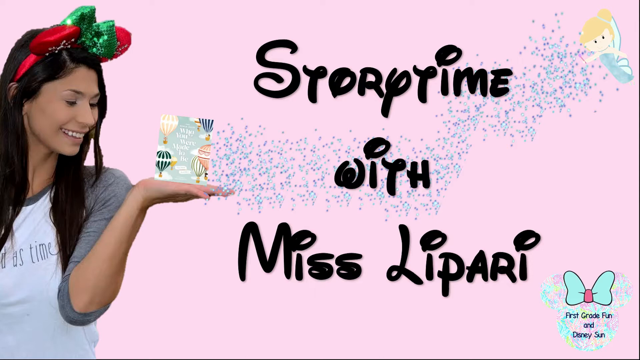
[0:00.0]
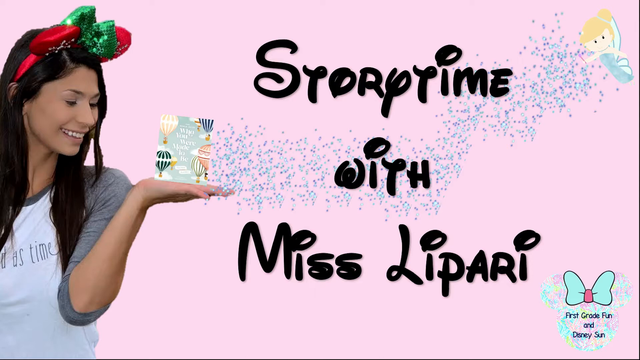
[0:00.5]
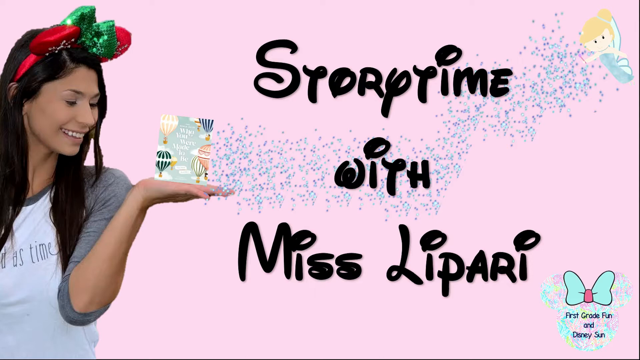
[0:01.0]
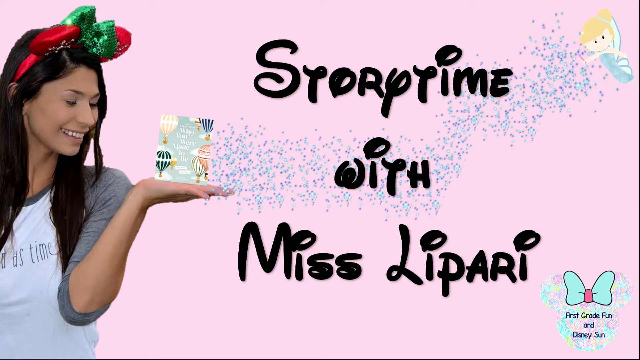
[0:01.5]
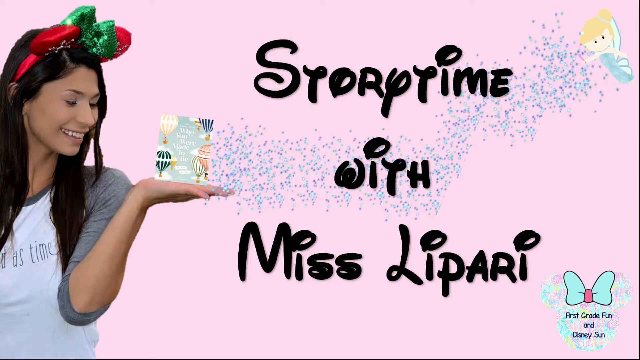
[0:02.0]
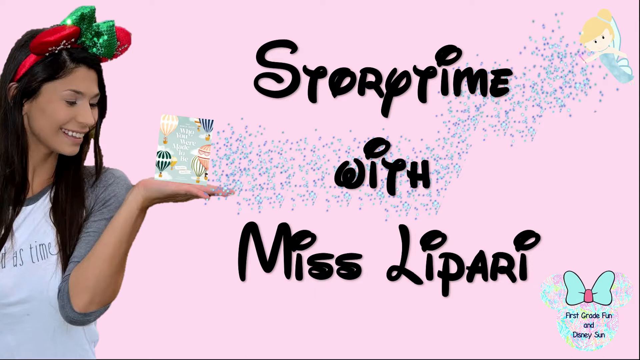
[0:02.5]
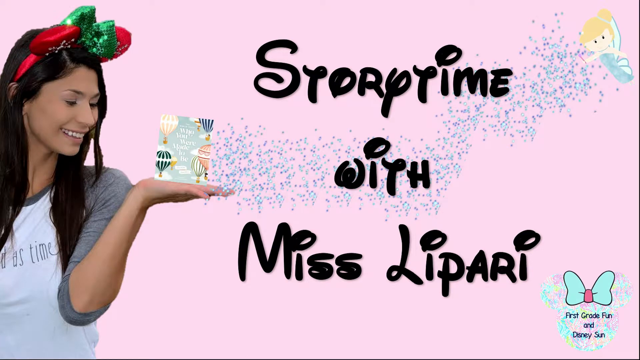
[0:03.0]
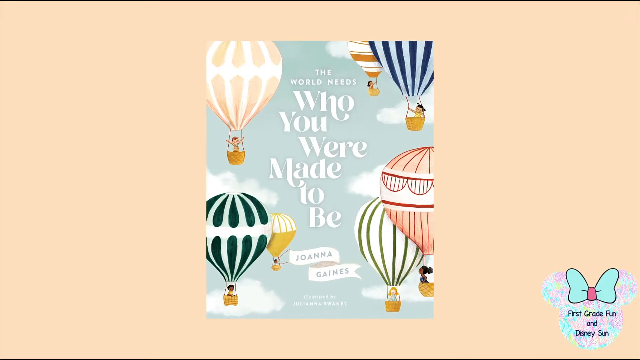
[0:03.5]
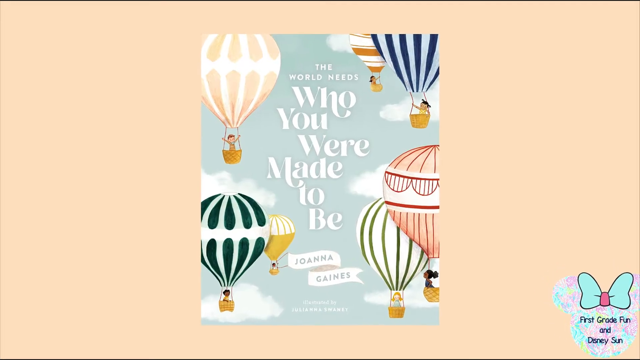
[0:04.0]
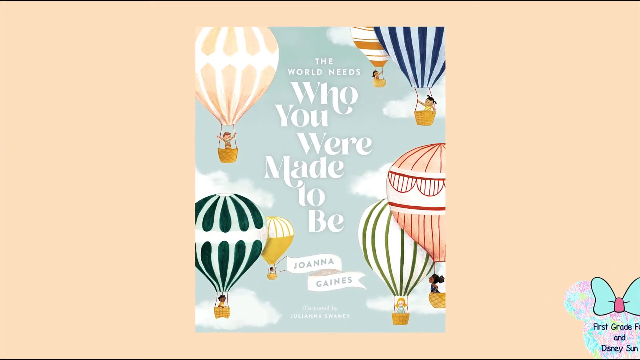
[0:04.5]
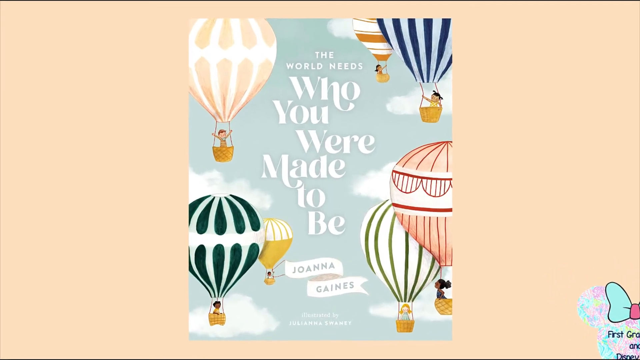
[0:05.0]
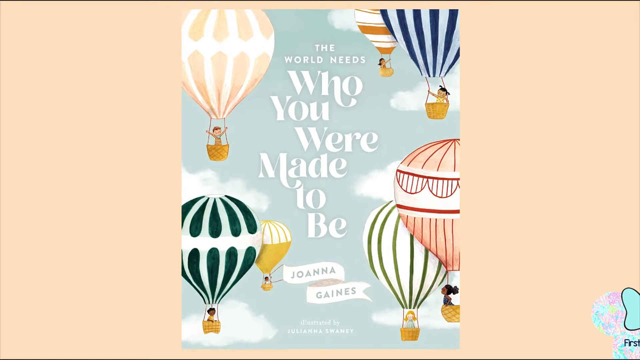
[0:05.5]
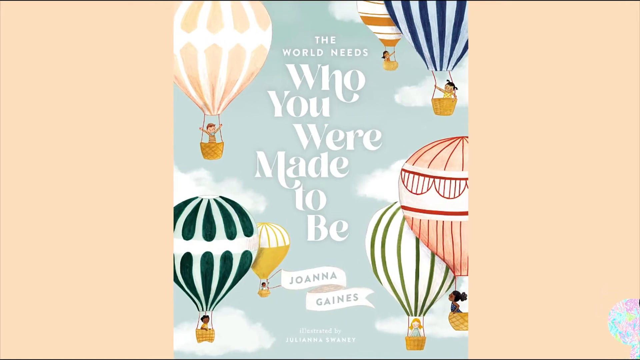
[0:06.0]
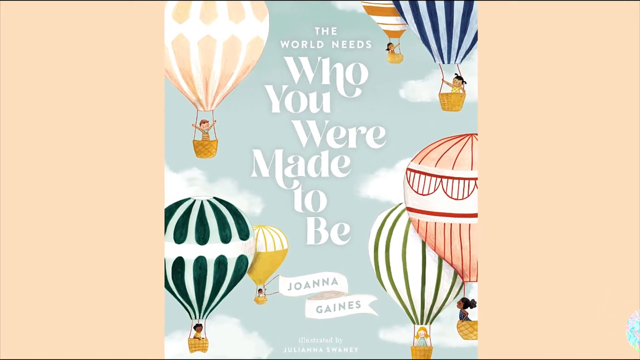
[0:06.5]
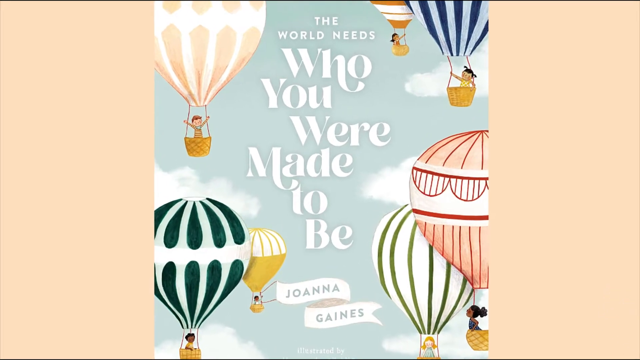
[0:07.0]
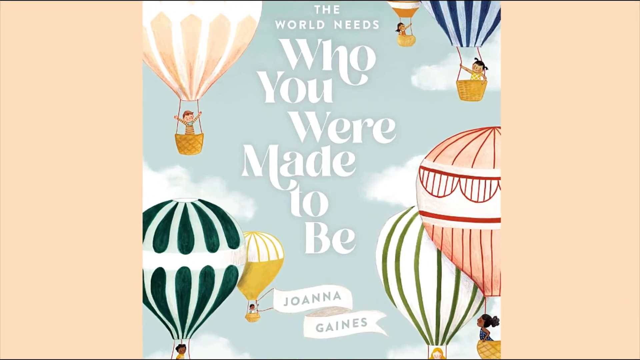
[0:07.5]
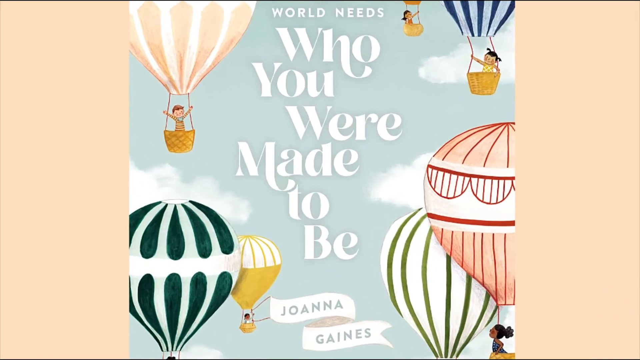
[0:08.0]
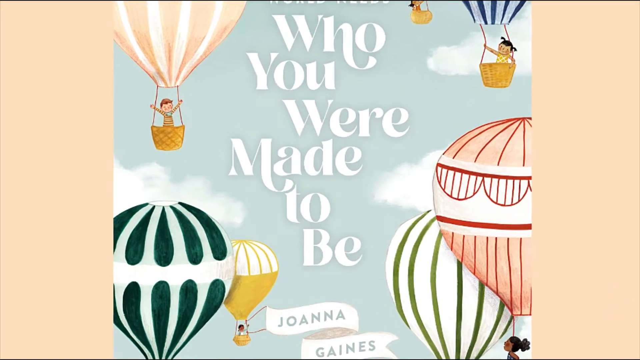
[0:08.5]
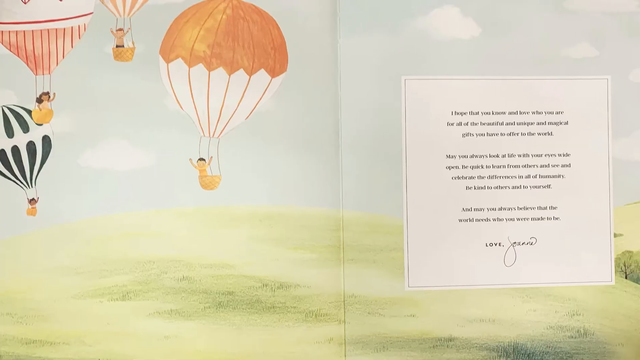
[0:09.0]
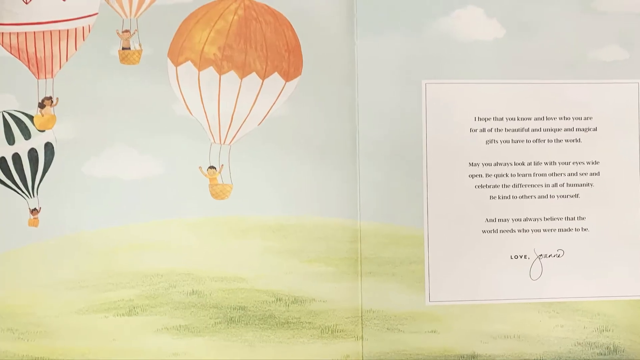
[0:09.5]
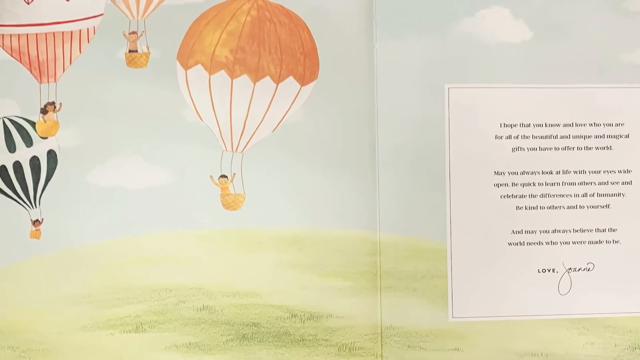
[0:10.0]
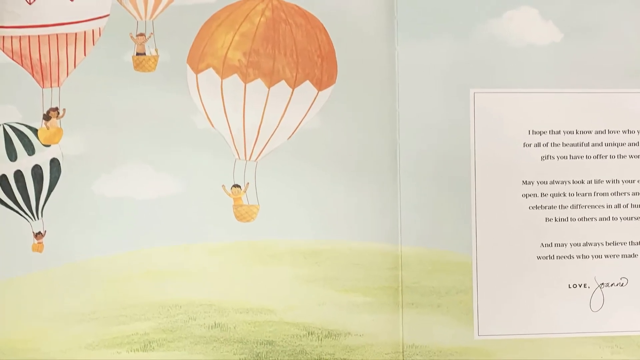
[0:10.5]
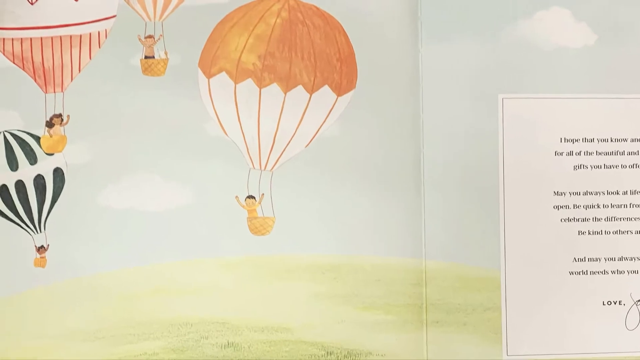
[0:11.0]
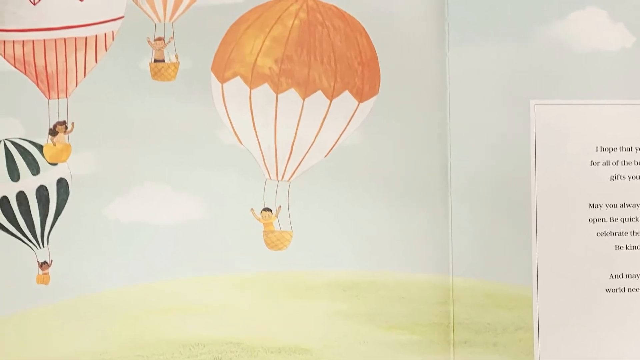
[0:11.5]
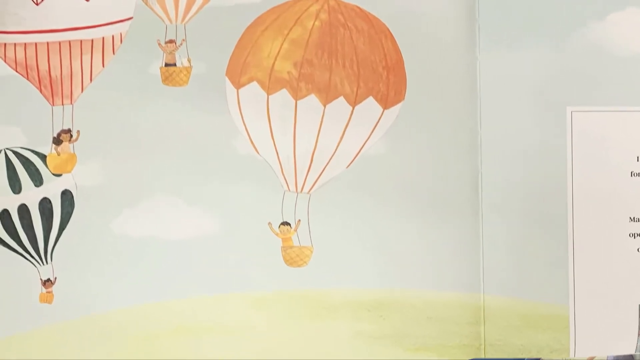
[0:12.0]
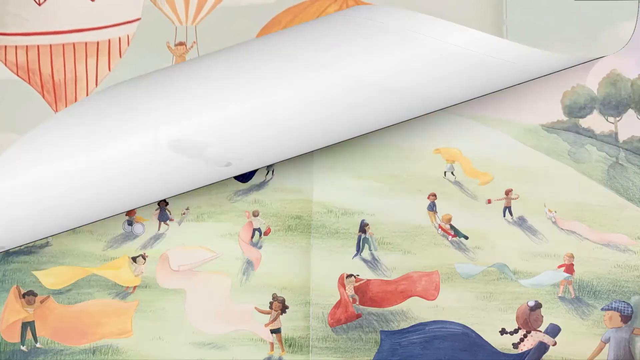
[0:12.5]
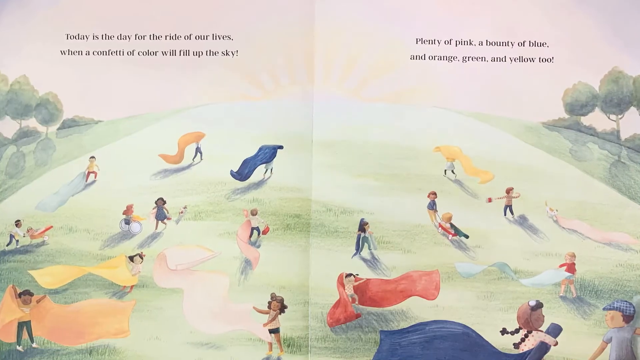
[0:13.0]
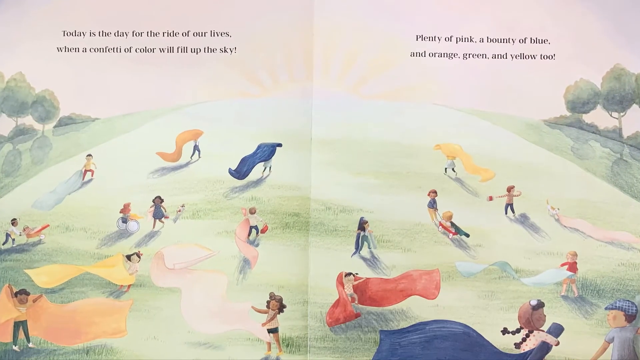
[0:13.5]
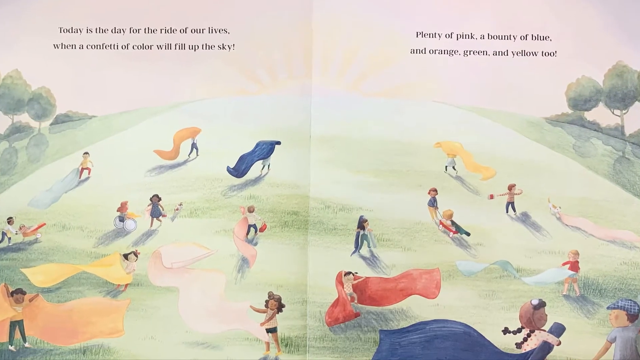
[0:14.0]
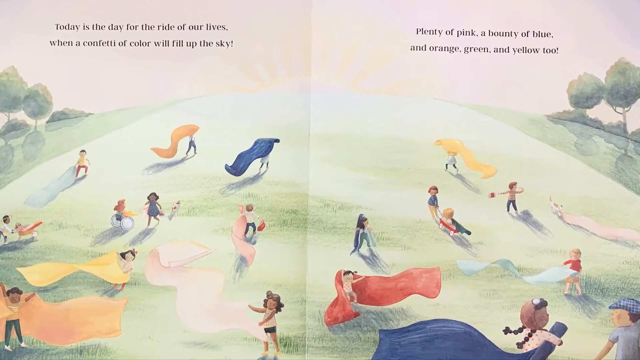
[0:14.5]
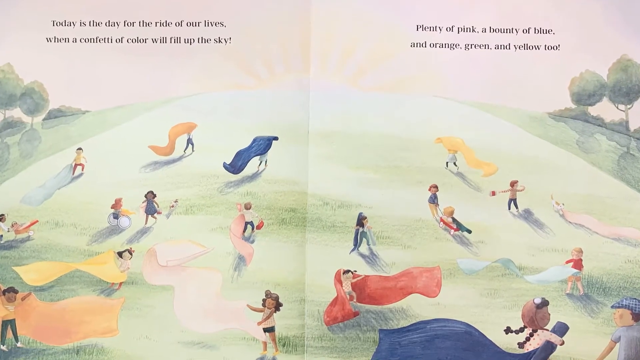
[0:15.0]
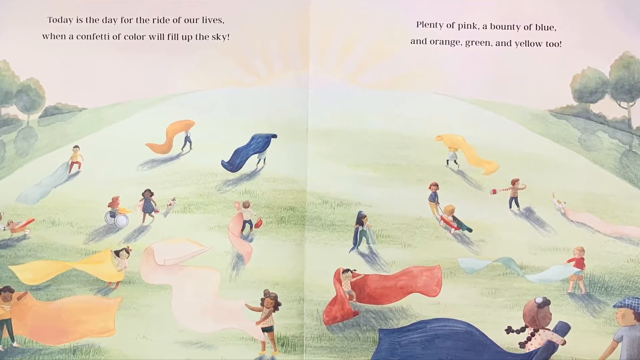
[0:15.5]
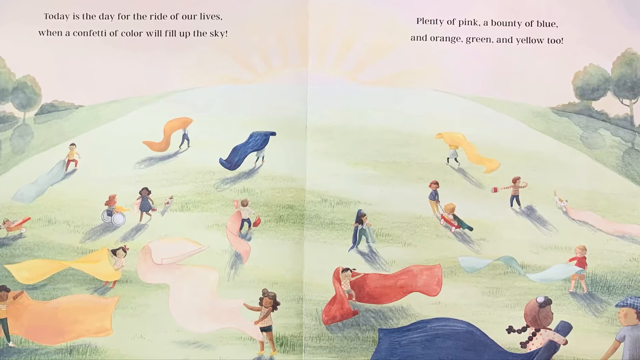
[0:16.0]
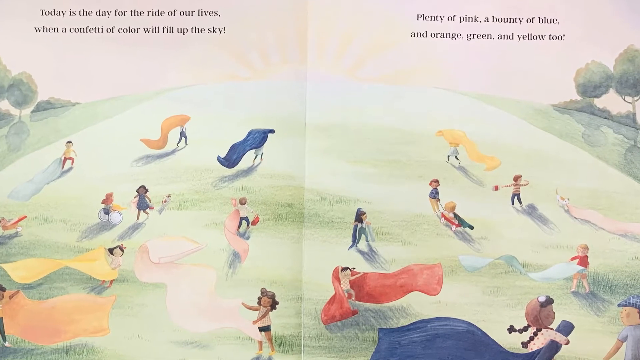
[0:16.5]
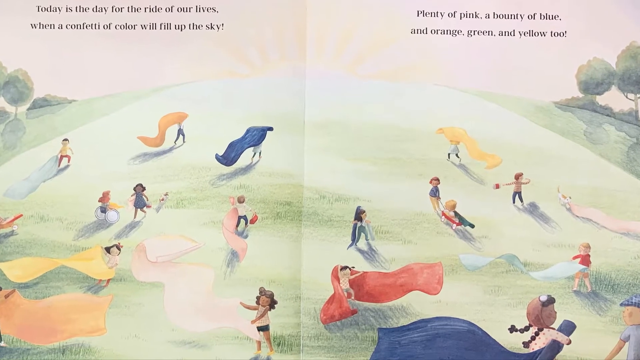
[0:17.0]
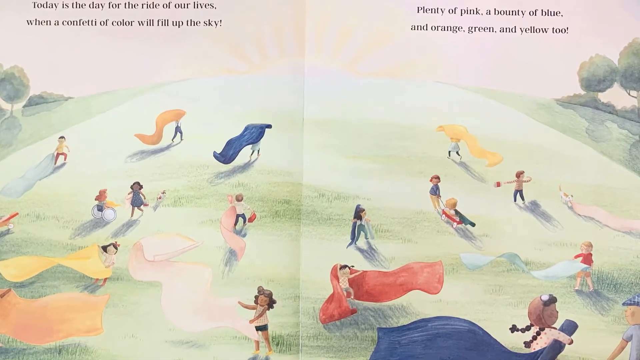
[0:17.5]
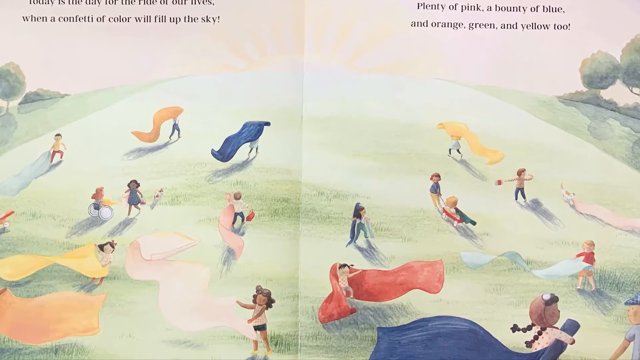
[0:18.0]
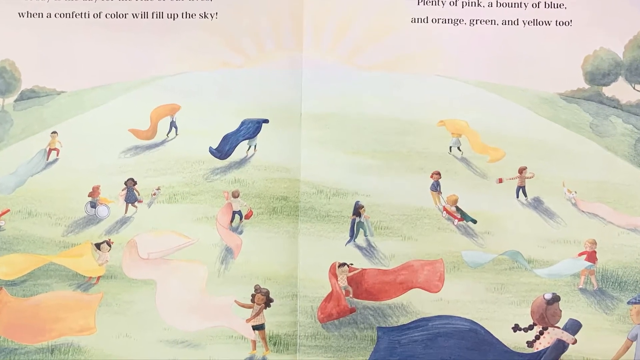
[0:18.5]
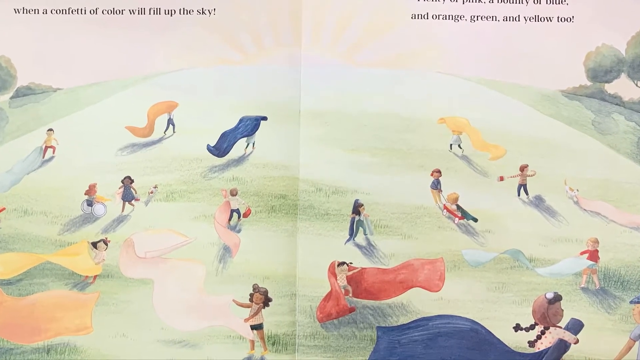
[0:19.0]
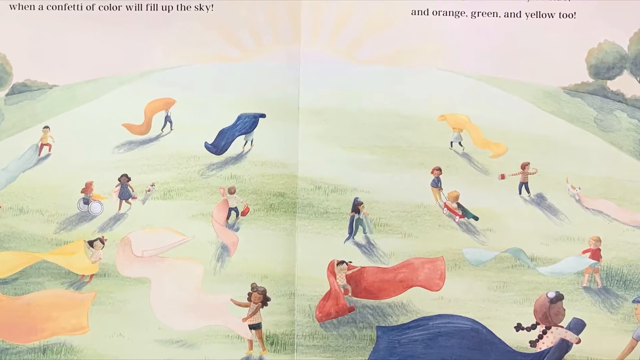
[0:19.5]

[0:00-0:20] The video opens on a title screen with kind of fairy-style black writing on a pink background that reads "story time with Miss Lipari". On the right-hand side a fairy scatters lots of fairy dust, which leads down to a book with a blue cover covered in hot air balloons. The book is displayed and held on the hand of a lady with long, flowing brown hair and a red and green headdress with a bow on it, wearing a grey and white topped t-shirt. The next shot is a sort of slow close-up zoom on the book, which reads "the world needs who you were made to be", with what is presumably the author's name, "Joanna Gaines", written below; the camera slowly zooms in on the cover with its many different hot air balloons. The book is then opened: the left page shows lots of hot air balloons, and the right page has a small message from the author, possibly some kind of thank-you for reading the book, as the view slowly zooms in on the balloons. The page turns to a spread where the left and right pages merge into one big green mound of a hill with lots of little children playing, all carrying what look to be scarves or rugs. There is writing at the top, and the children all seem to be making their way up the hill or playing on it with their rugs and sheets.